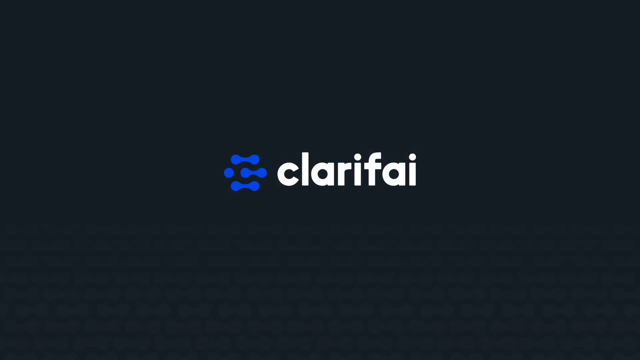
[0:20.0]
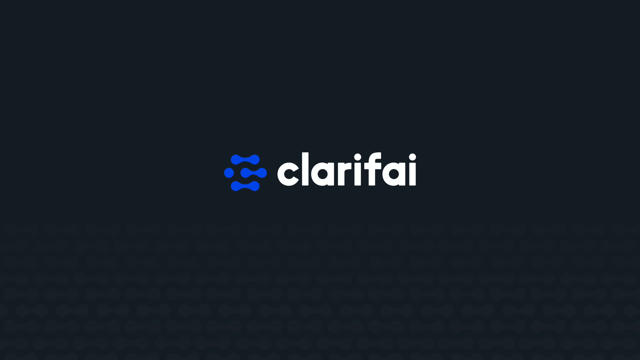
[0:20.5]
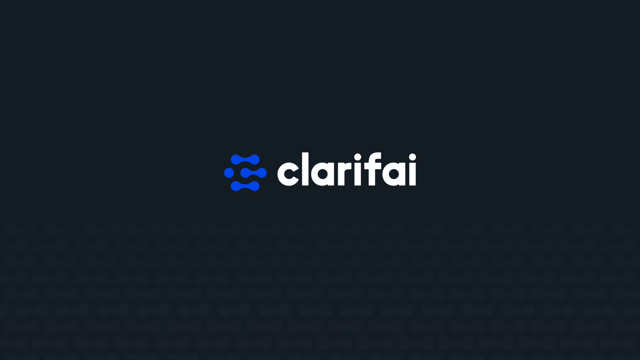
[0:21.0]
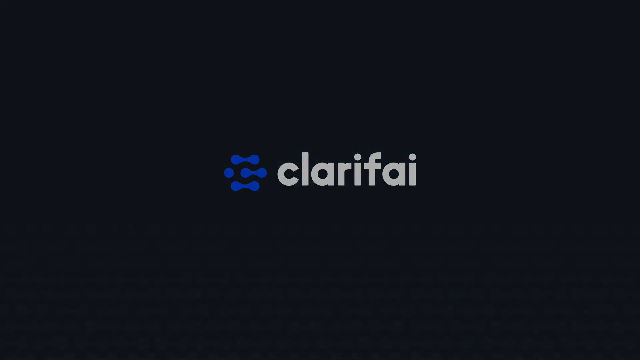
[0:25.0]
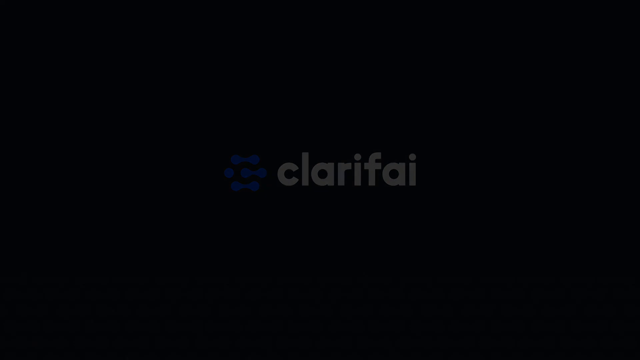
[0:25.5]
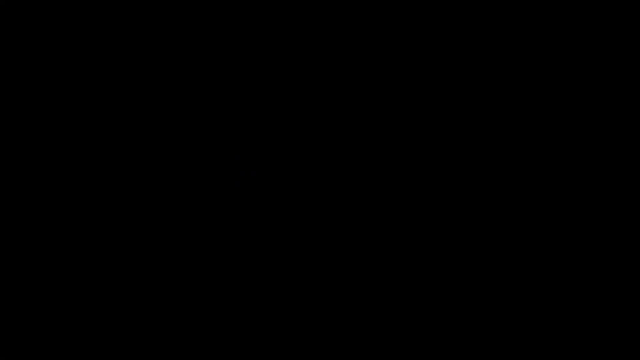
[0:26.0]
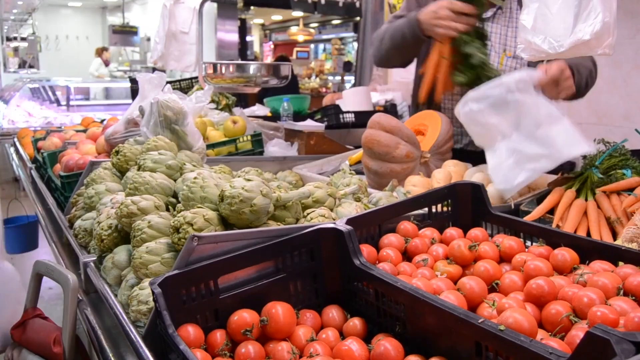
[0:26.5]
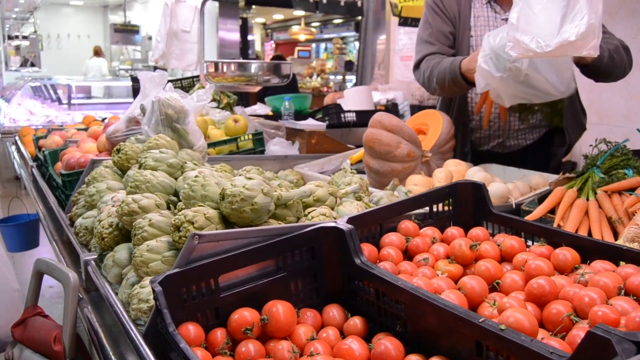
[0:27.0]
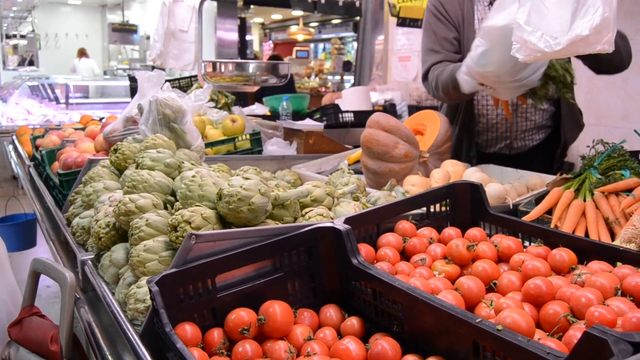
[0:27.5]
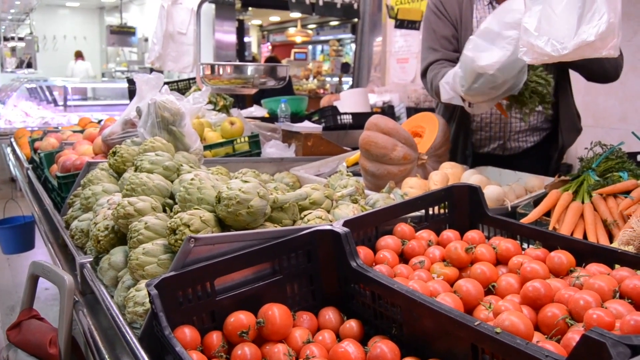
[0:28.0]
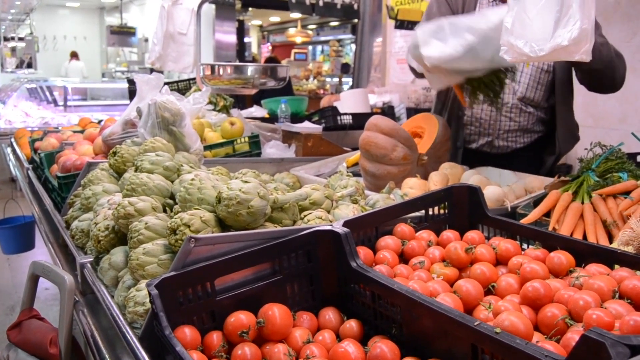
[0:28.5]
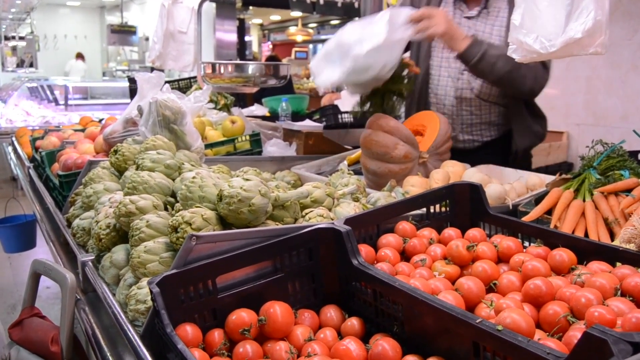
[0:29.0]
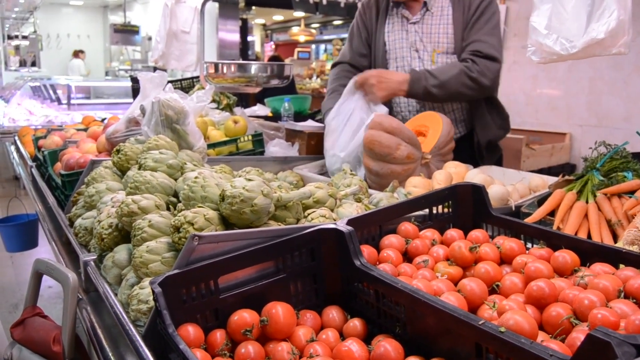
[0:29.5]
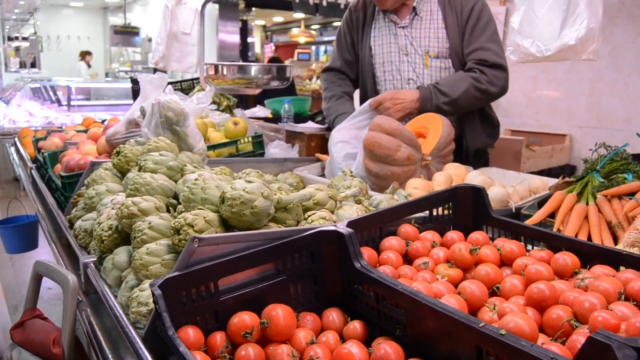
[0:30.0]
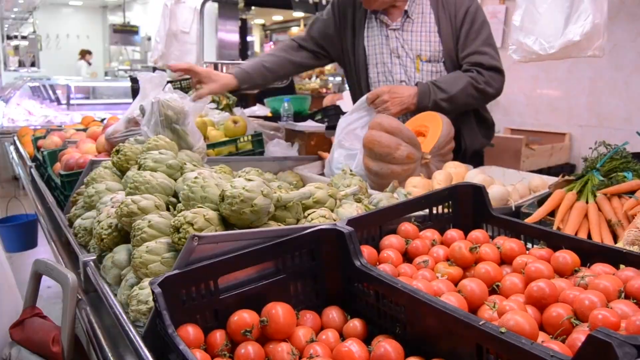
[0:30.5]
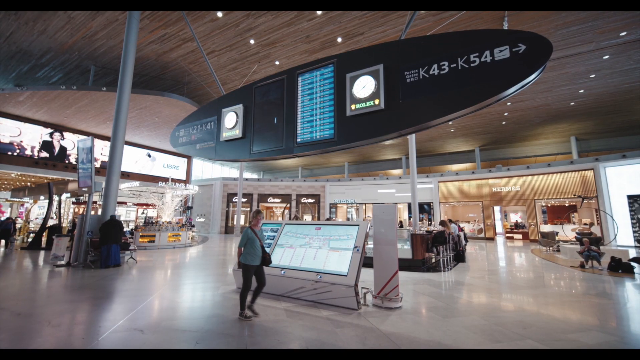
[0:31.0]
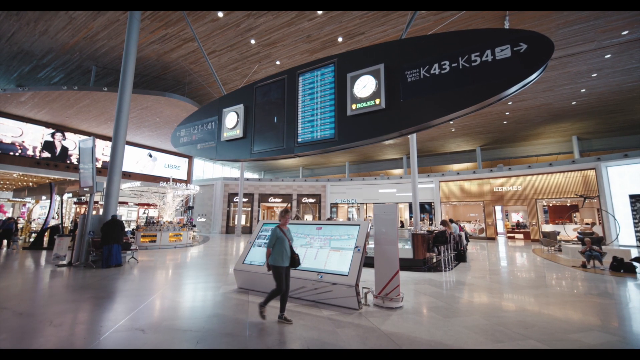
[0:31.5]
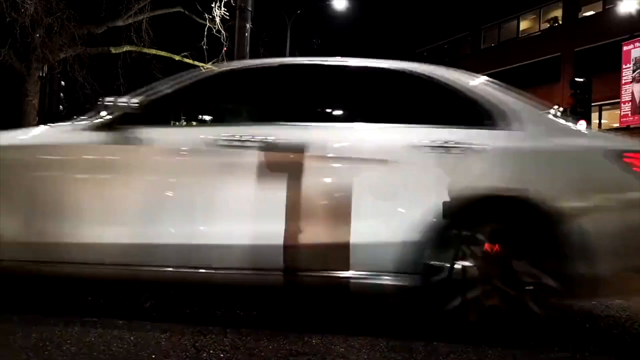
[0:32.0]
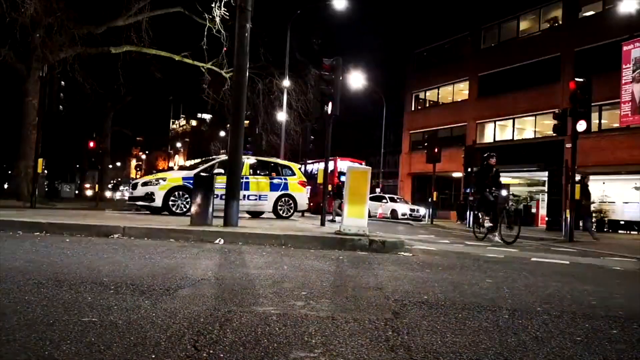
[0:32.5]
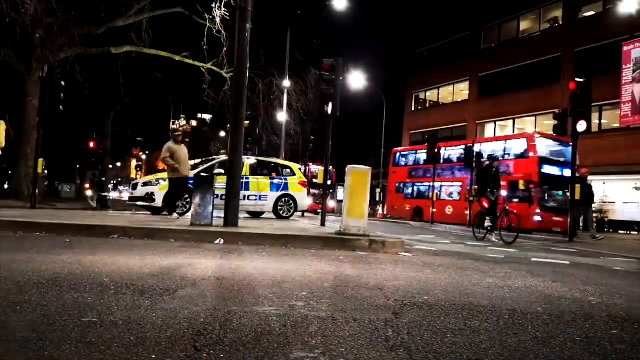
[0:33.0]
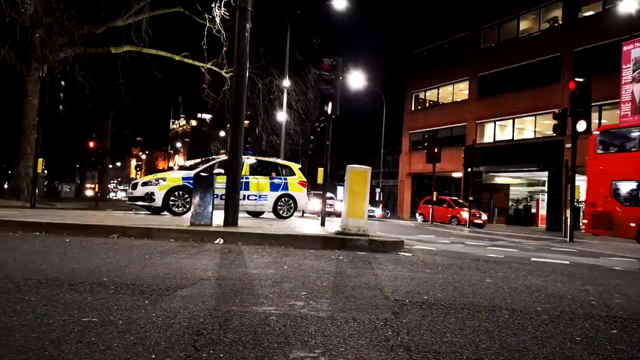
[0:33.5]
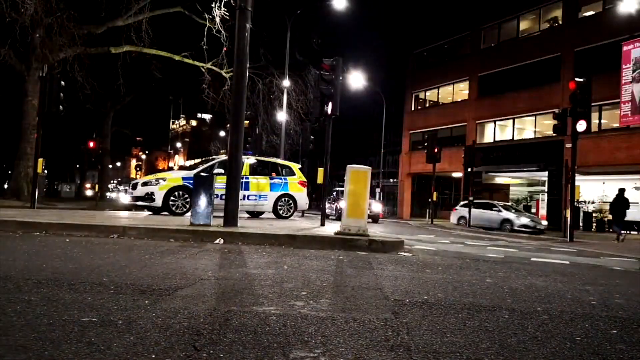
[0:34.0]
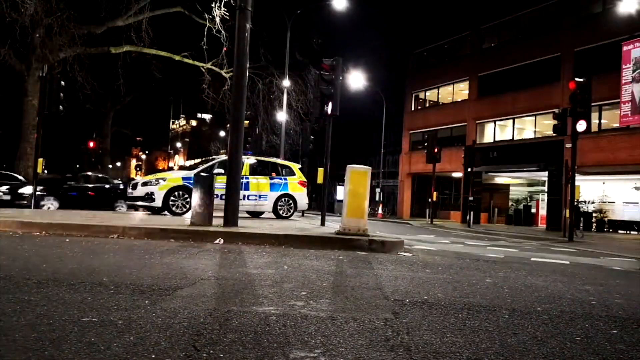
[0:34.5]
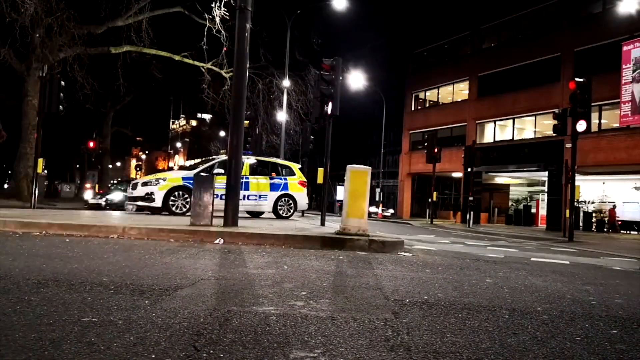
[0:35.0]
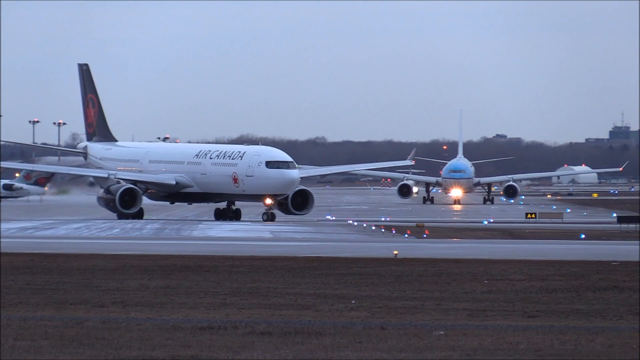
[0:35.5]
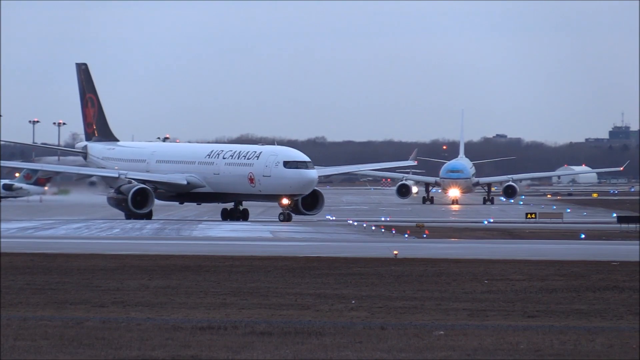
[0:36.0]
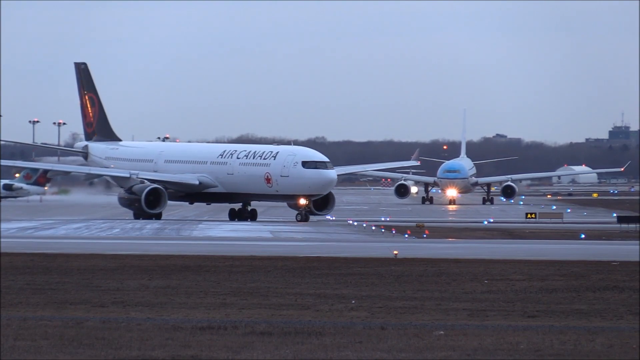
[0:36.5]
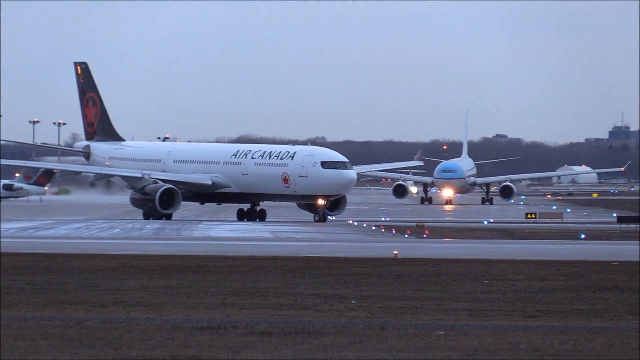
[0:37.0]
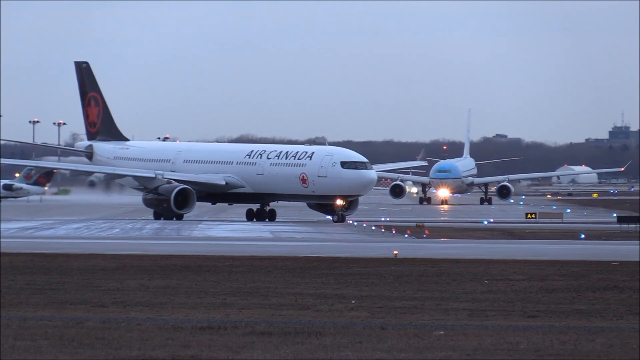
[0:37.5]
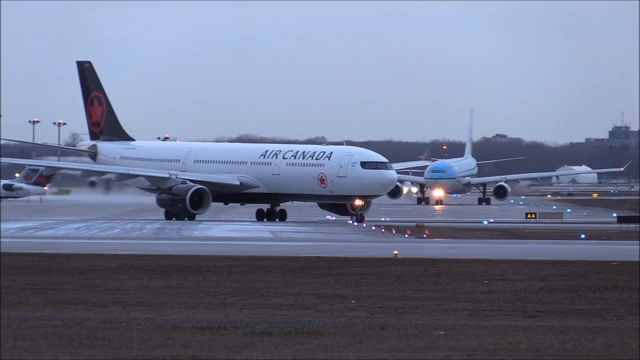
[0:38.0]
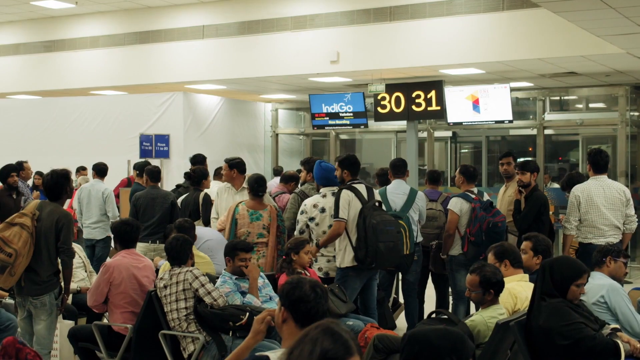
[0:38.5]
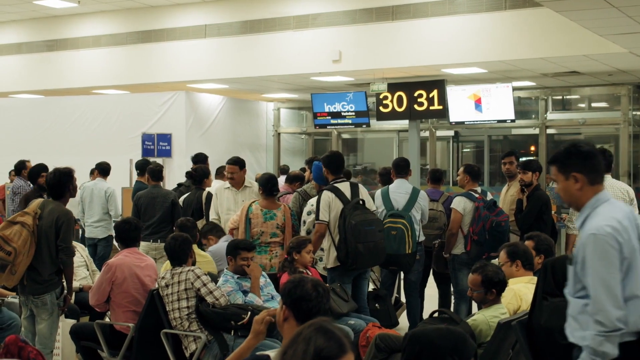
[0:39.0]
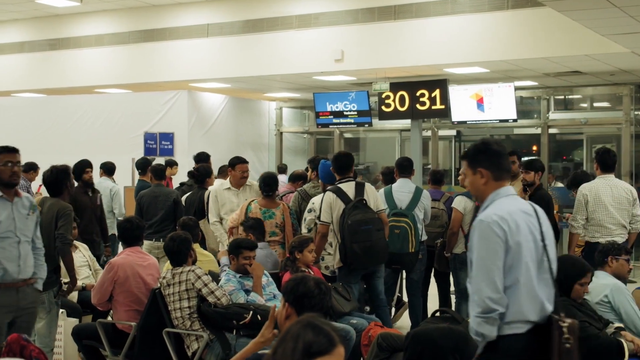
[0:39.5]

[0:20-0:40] The Clarifai title appears in white letters above a black background, with three filled-in infinity shapes in blue arranged horizontally and a dot before the centre one. Next is a market stall with artichokes, tomatoes and carrots, and a pumpkin to the rear; a man is putting a bunch of carrots into a plastic bag. Then a shopping centre with a large sign above it appears, and a woman in a pale blue jumper with a black handbag across her shoulder walks past a digital sign. A busy road outside a building follows, with a police car parked in the centre and buses passing by. Next, an Air Canada aeroplane is on a runway with another plane in blue in the background. An internal shot of the airport shows people milling around, either sitting or walking.